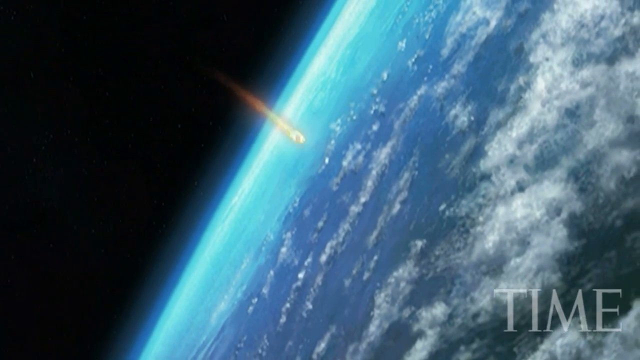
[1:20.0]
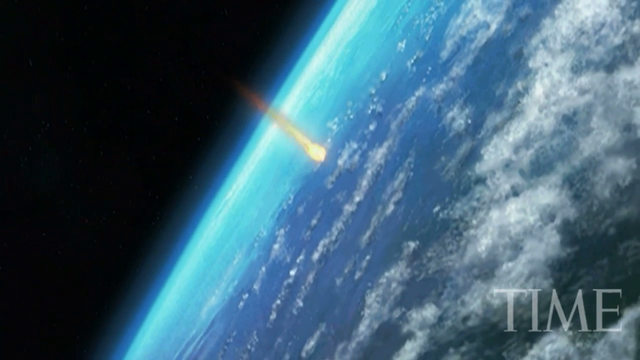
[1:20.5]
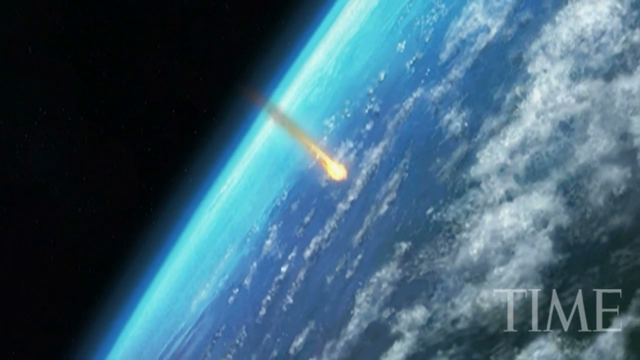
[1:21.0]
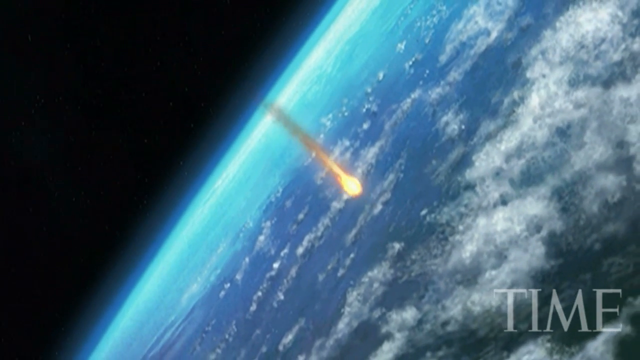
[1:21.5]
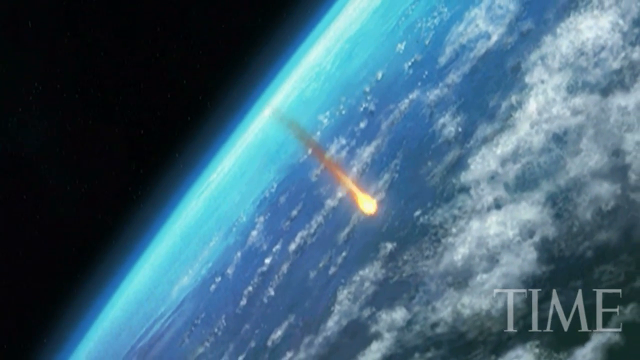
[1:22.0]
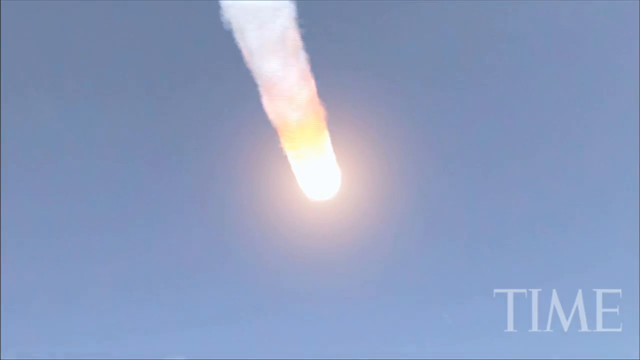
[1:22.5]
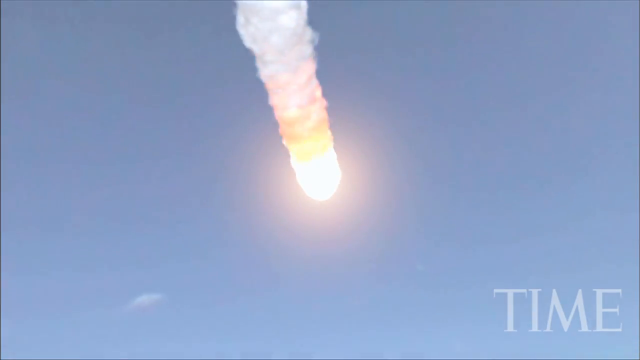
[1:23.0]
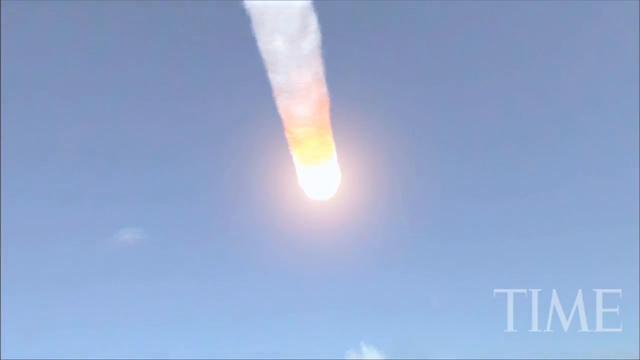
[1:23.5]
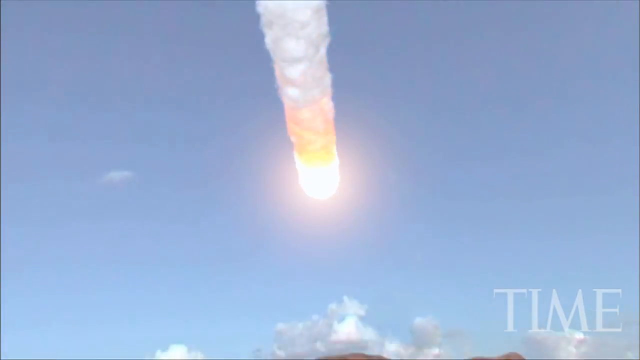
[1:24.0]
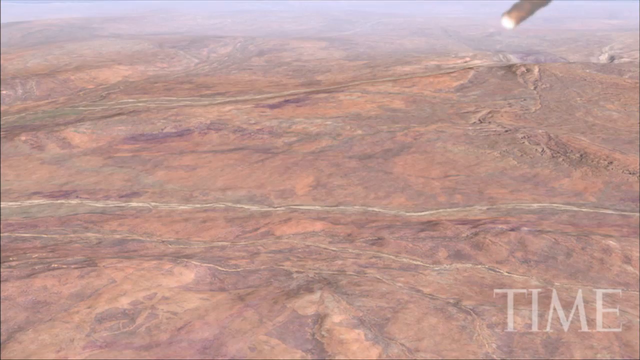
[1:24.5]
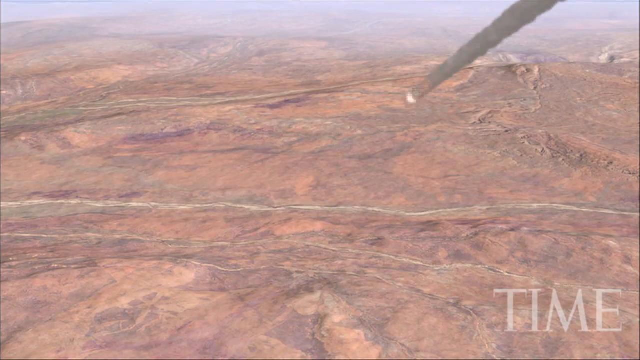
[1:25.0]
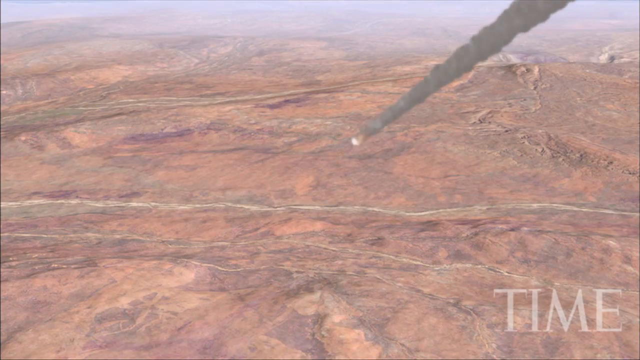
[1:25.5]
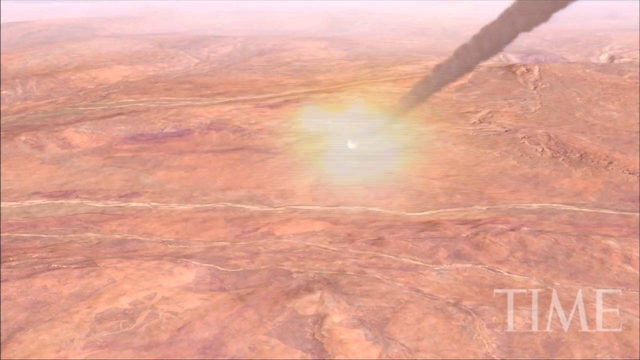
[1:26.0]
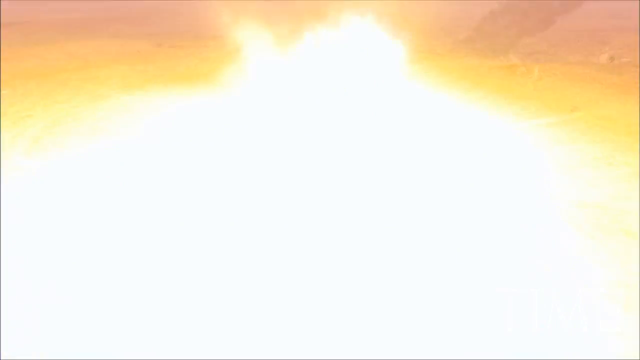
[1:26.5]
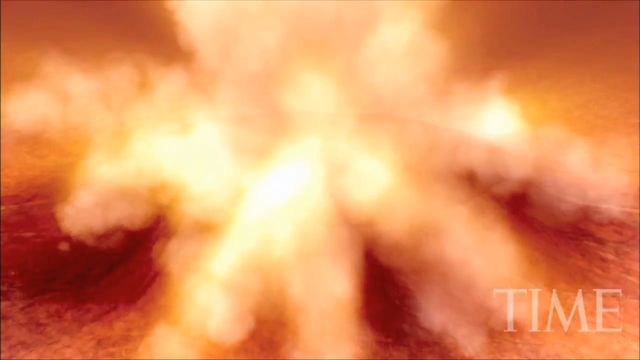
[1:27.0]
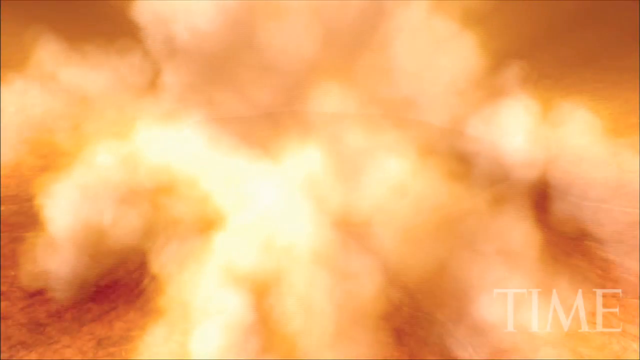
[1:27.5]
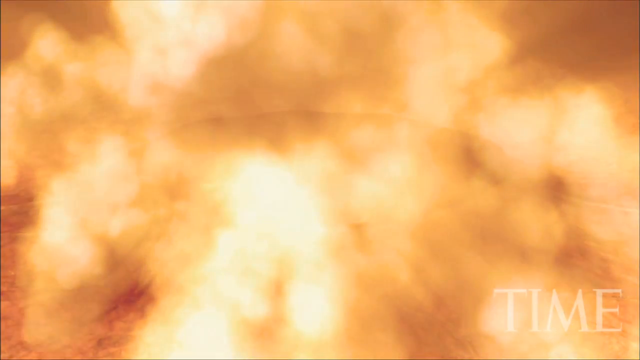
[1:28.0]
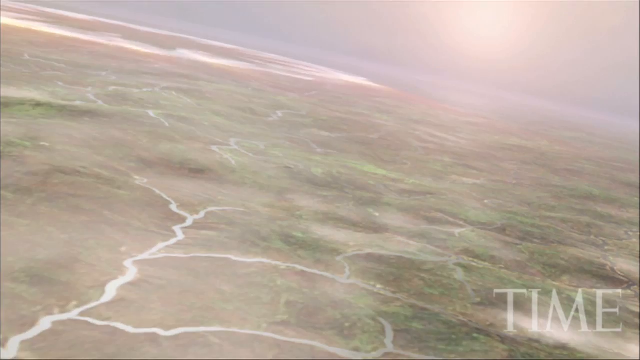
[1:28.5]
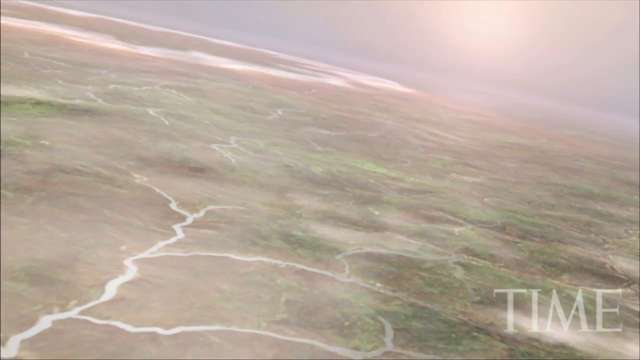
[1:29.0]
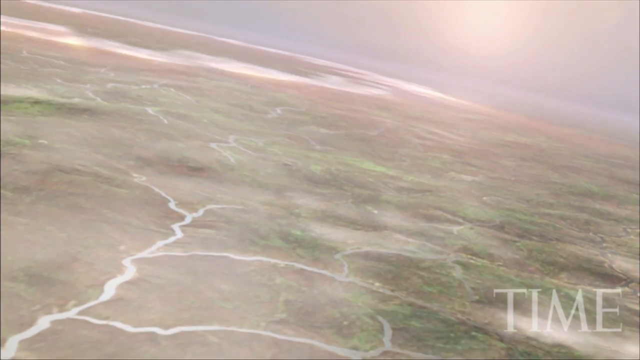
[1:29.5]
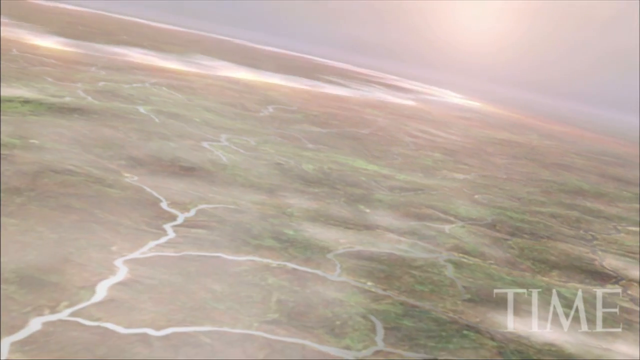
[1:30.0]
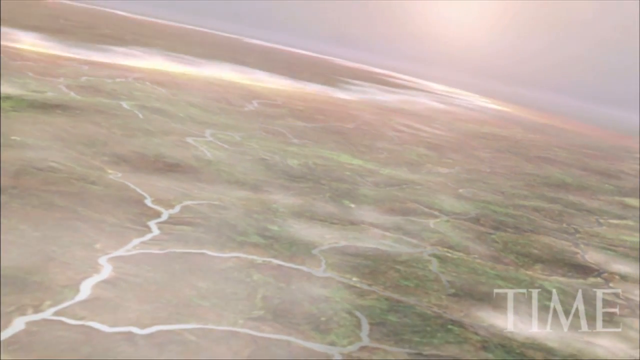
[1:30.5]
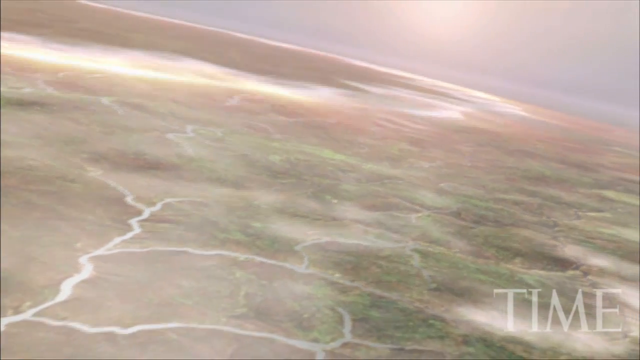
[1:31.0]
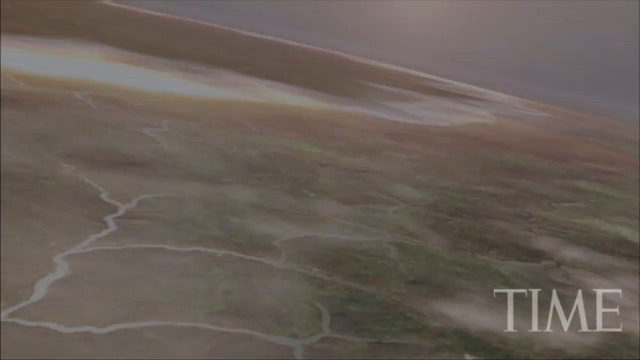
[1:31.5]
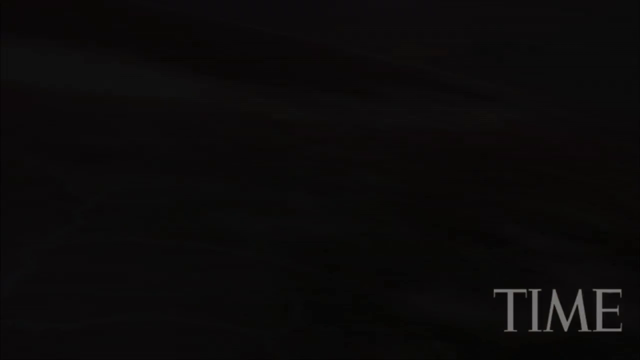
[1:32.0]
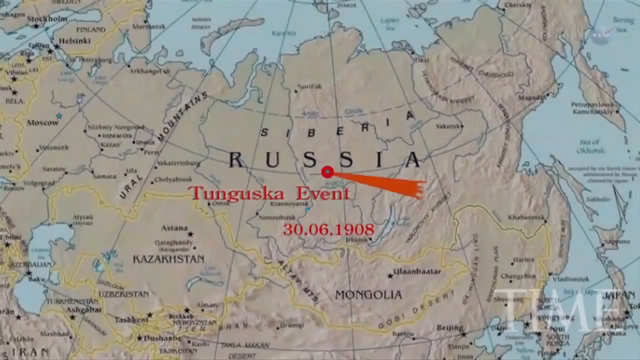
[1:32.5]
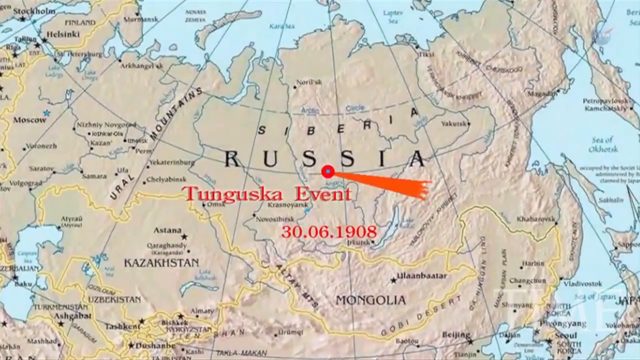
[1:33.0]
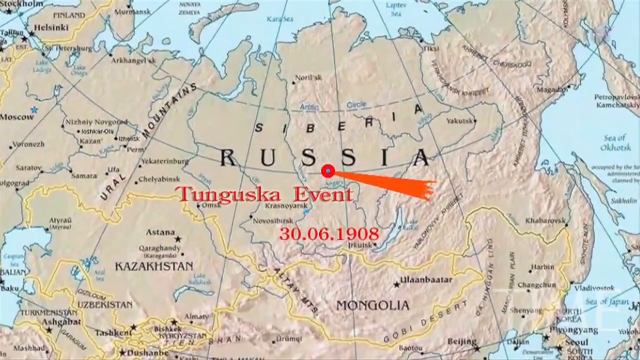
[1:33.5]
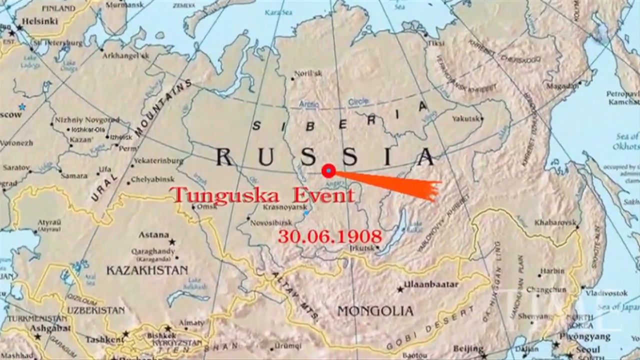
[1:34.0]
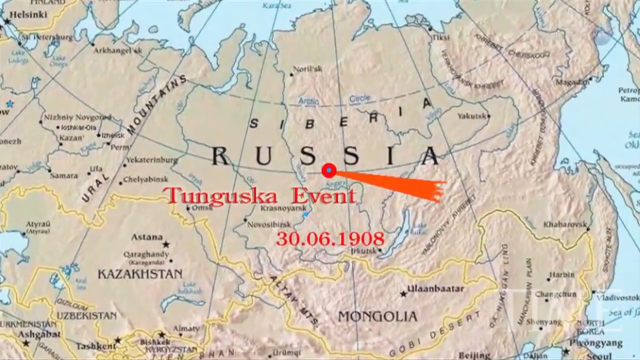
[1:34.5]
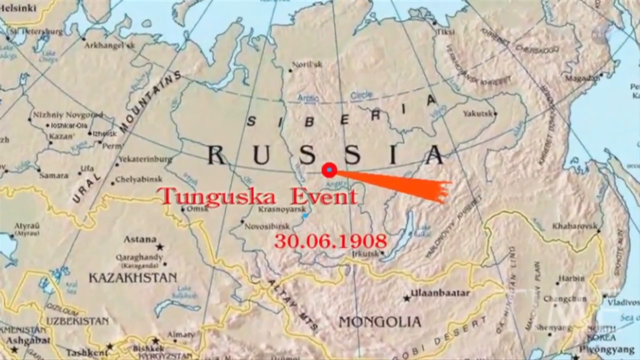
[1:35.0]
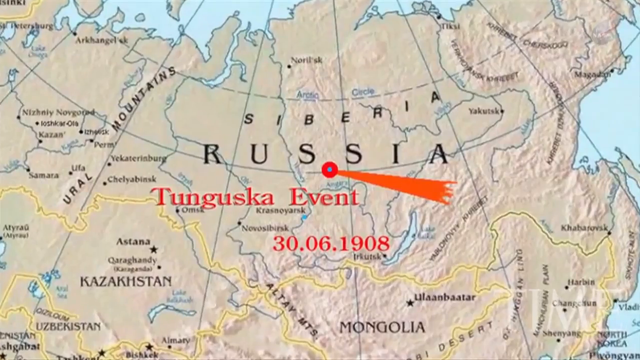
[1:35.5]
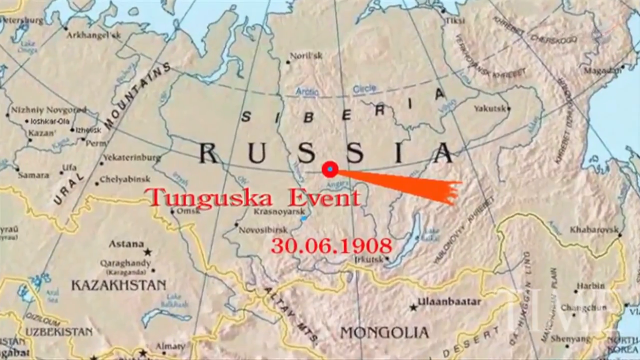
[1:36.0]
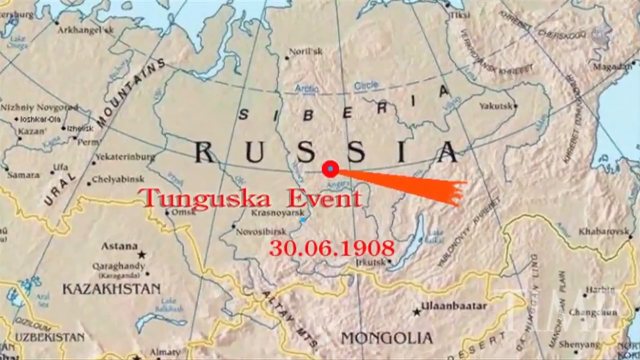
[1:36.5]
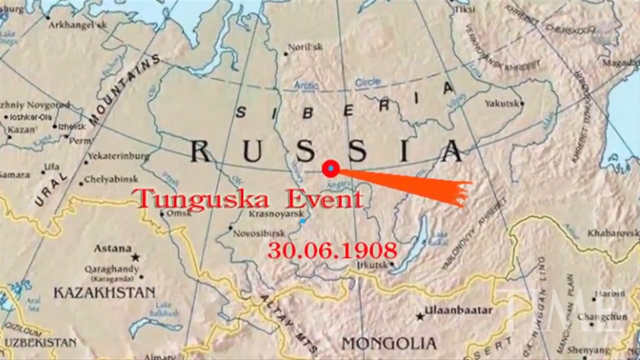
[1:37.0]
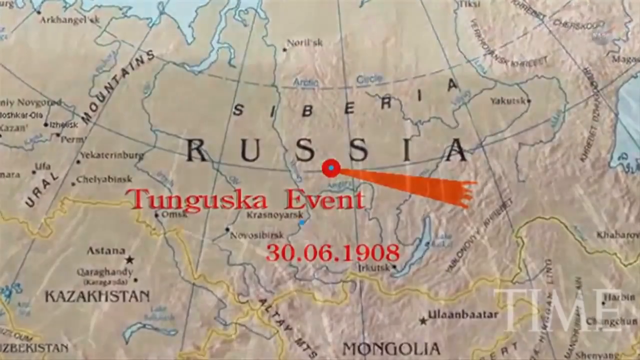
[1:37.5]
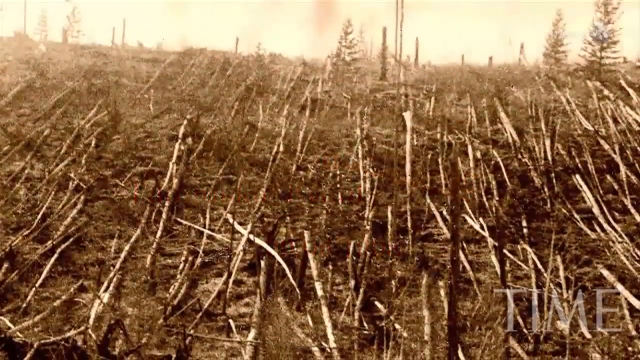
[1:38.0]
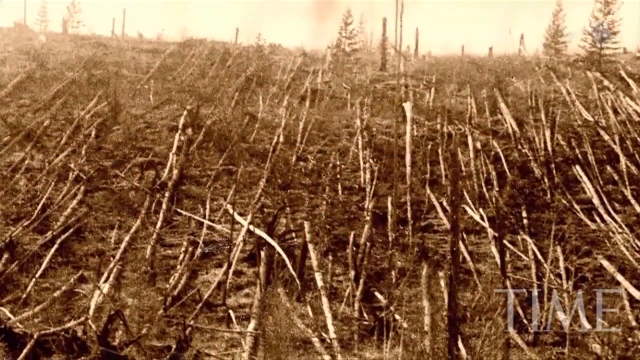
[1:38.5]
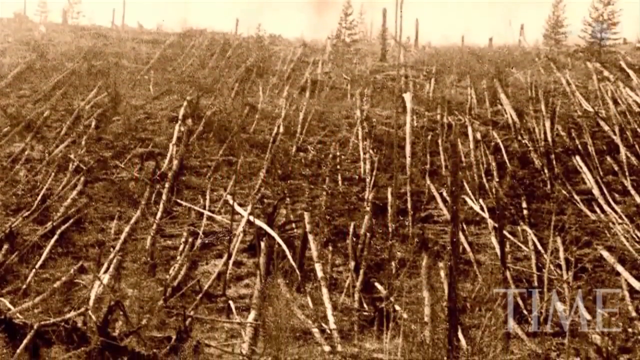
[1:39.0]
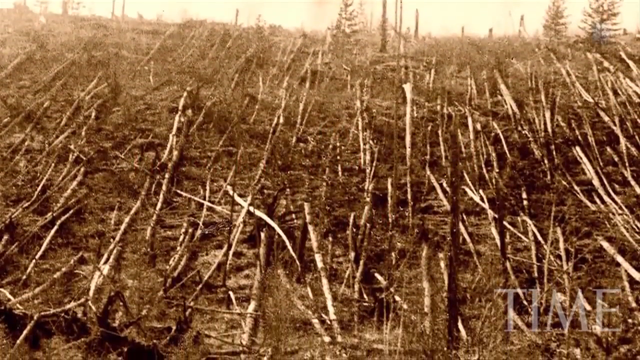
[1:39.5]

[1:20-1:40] The Earth is on the right as an asteroid falls out of the sky toward it, moving from the top left of the screen down toward the center as a large red fireball. The video then transitions to the large red fireball coming in from the top right of the screen and crashing into the Earth, shown as a brown, desert-looking planet, where the fireball explodes. The impact creates a large shockwave that spreads across the Earth, flattening everything it comes across.